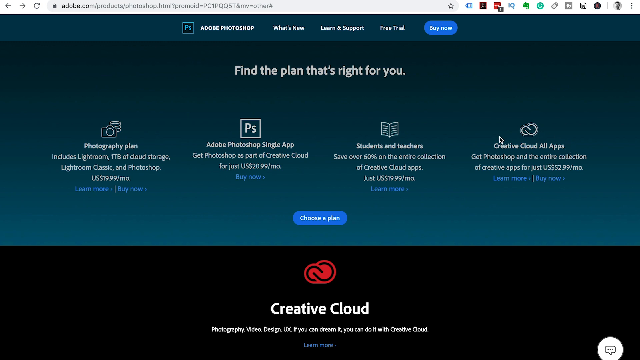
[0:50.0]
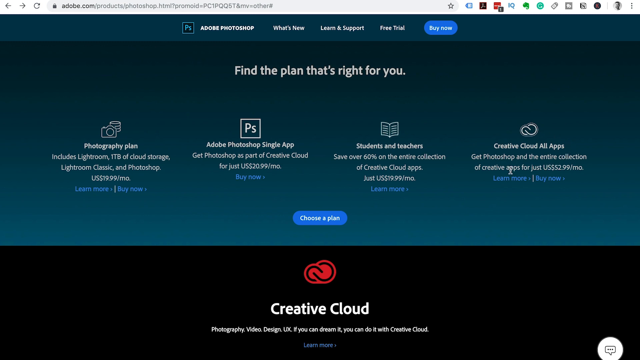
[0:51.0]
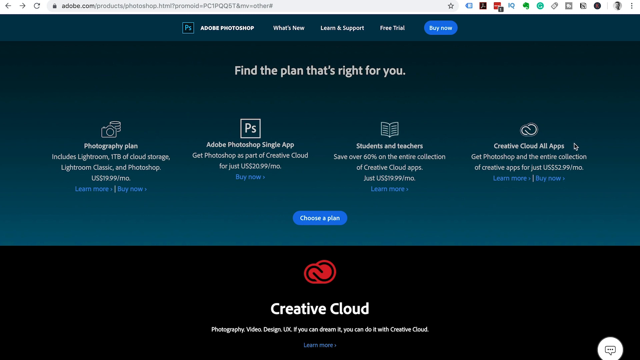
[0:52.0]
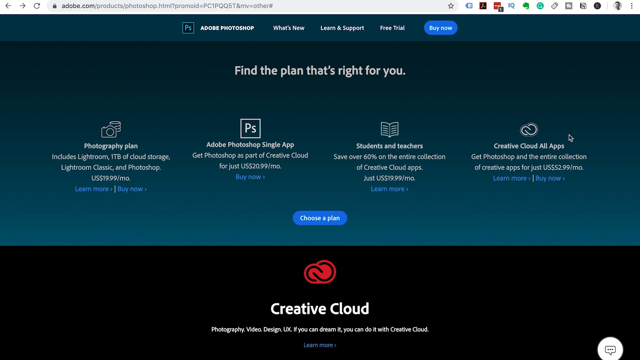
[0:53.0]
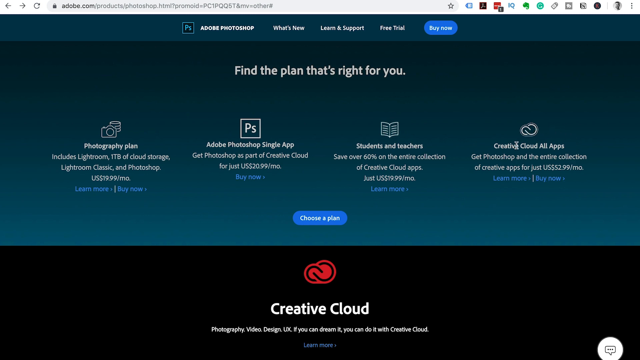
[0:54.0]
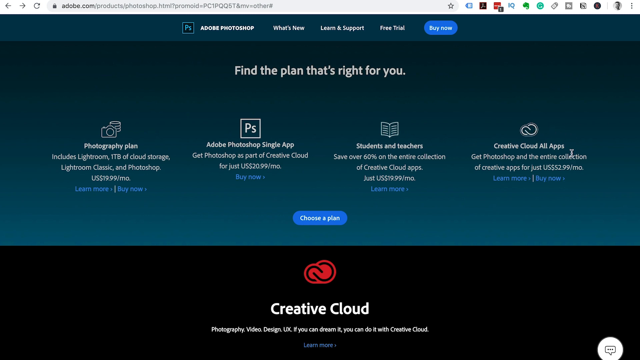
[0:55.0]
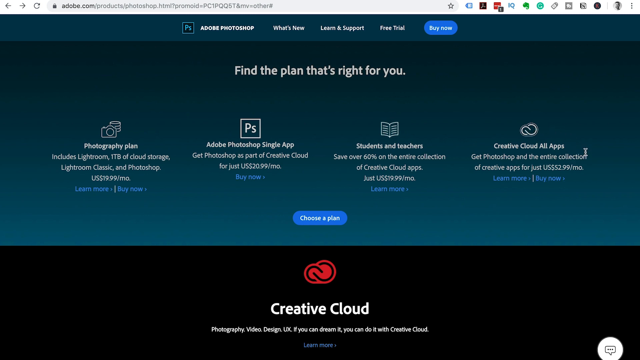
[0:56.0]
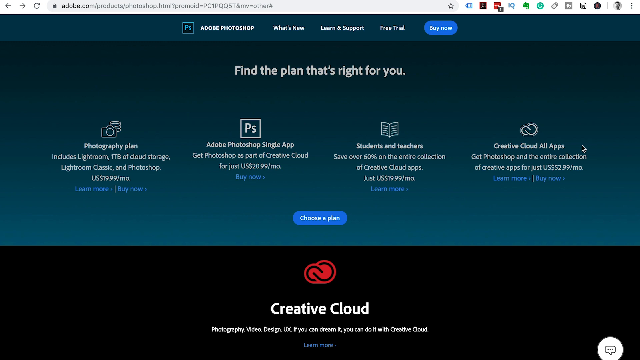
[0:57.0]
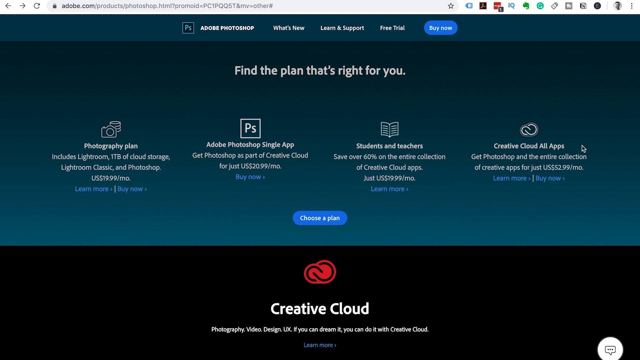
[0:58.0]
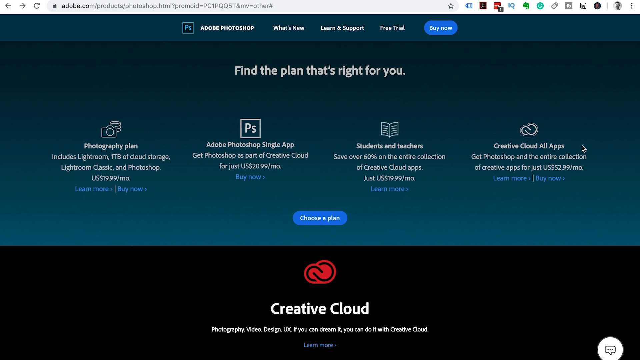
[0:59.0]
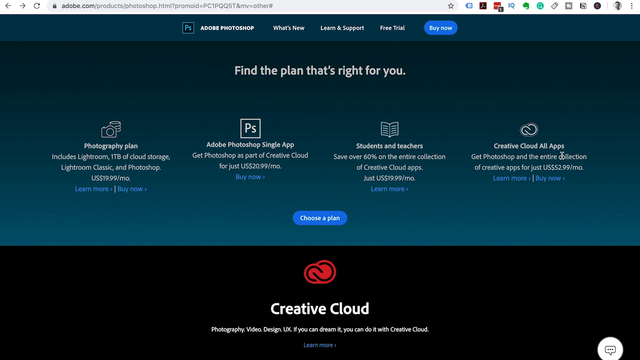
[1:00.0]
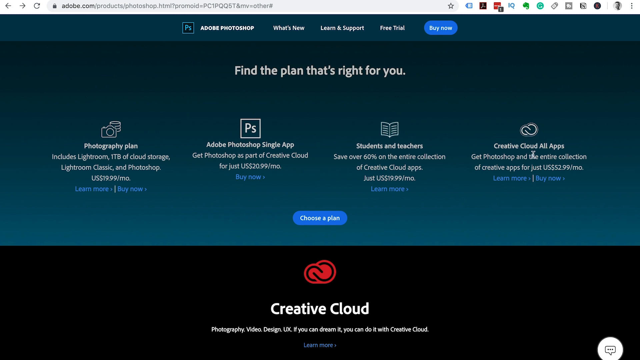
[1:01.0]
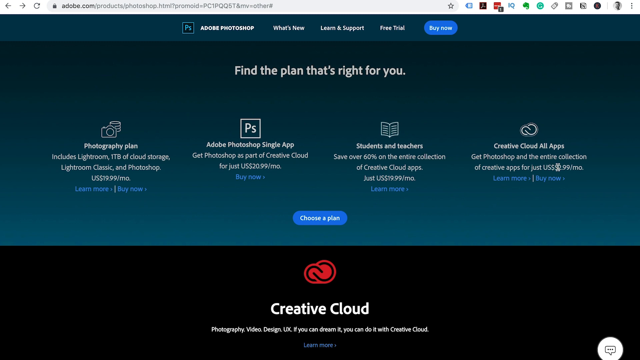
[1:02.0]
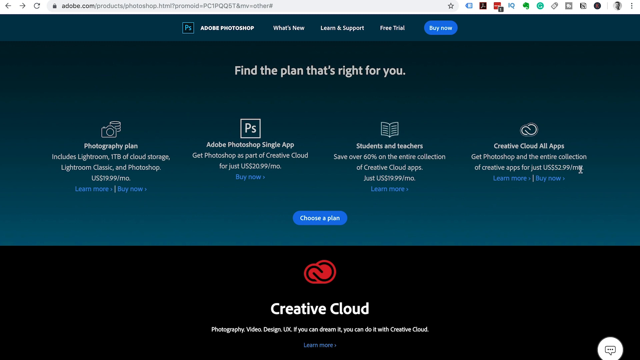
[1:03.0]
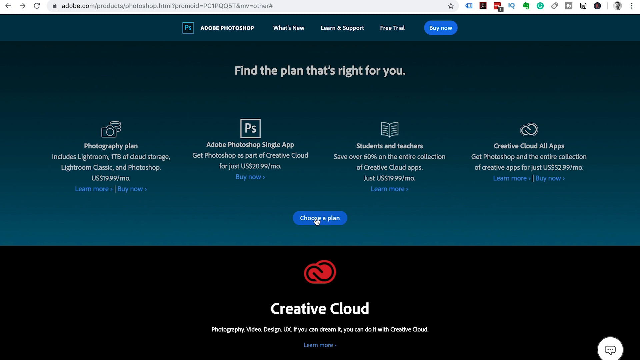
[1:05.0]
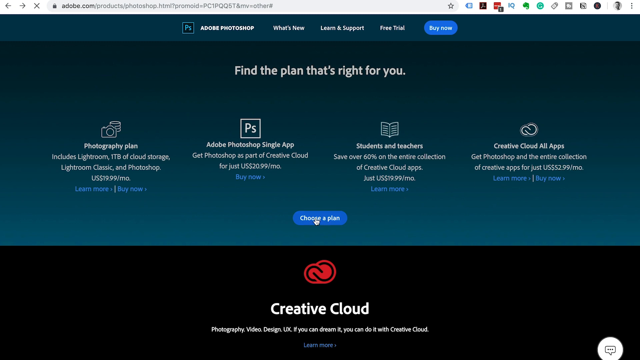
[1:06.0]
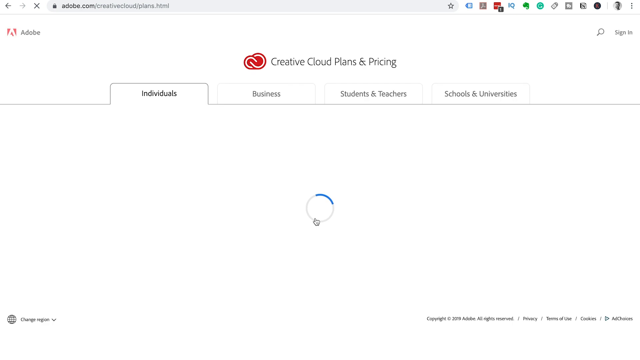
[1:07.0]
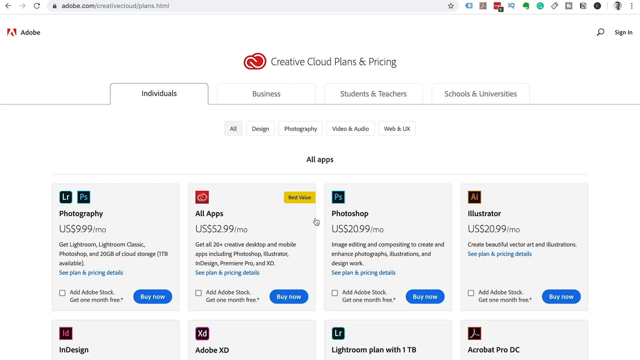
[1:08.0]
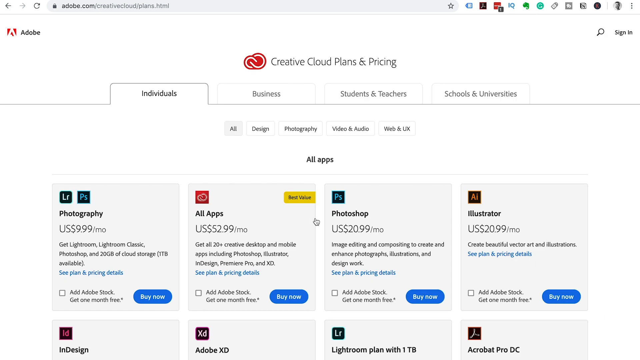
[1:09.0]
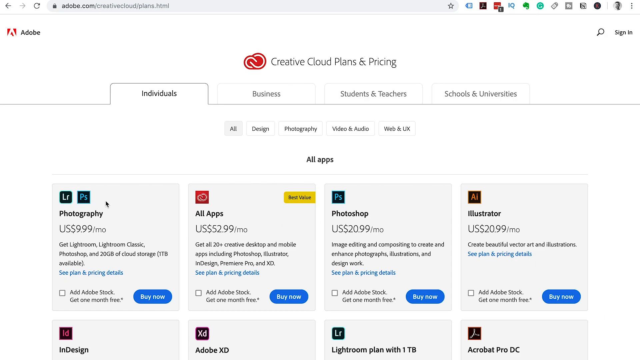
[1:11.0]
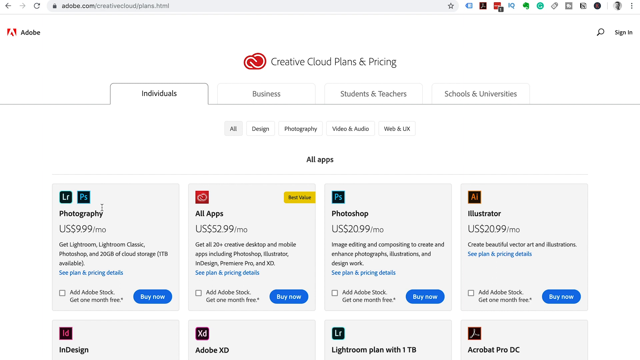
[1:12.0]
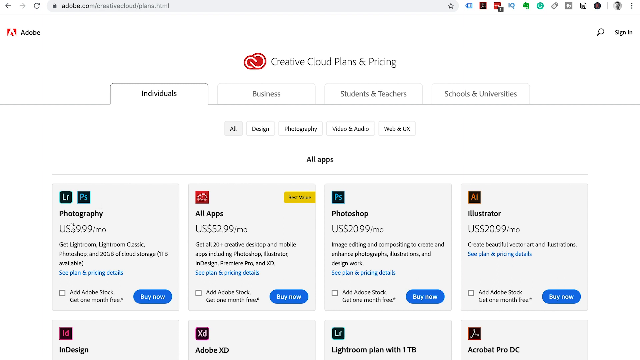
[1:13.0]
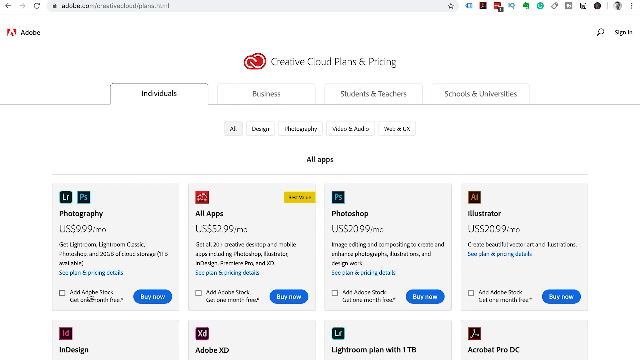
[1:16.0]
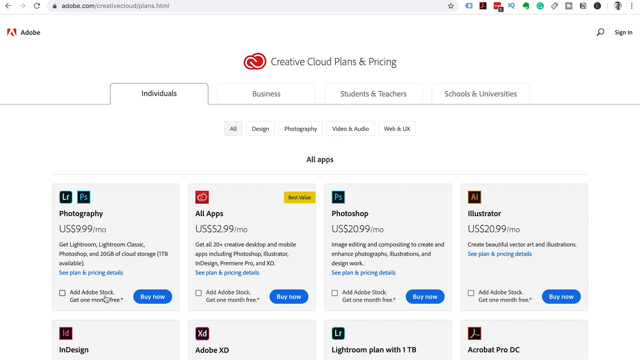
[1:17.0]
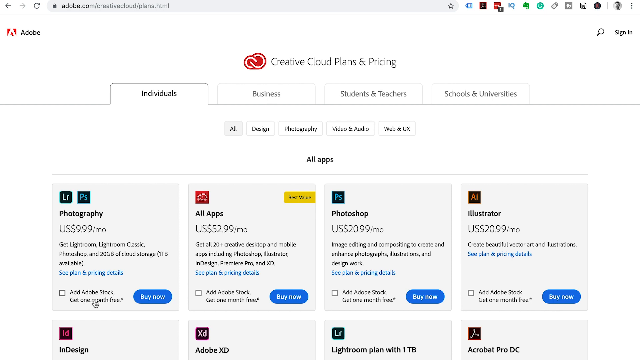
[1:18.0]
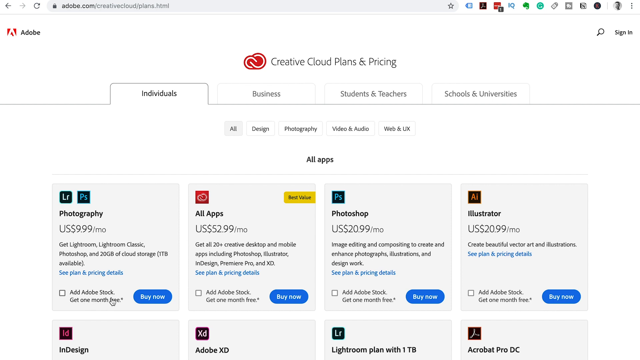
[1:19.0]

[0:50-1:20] Someone uses a mouse, hovering the arrow around the Creative Cloud All Apps option on the far right and sort of circling it, seemingly pointing out that this is what they are interested in. They go to the $52.99 price, and a button at the bottom says "choose a plan." They click "choose a plan" and circle the photography option, which is $9.99 a month. They then move to the next option to the right of the leftmost one, the all apps option at US $52.99 a month, circling it and in particular circling the $52.99 monthly fee.